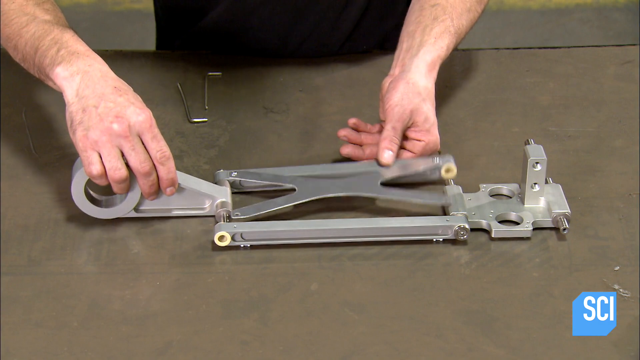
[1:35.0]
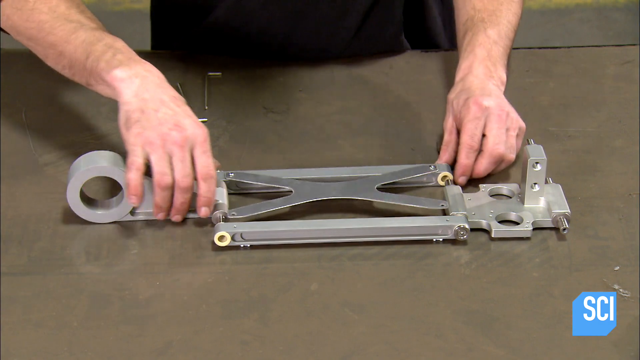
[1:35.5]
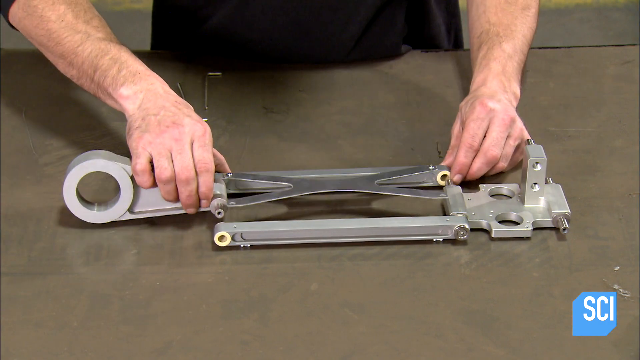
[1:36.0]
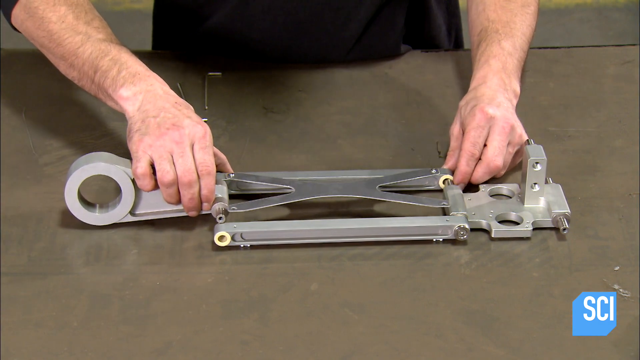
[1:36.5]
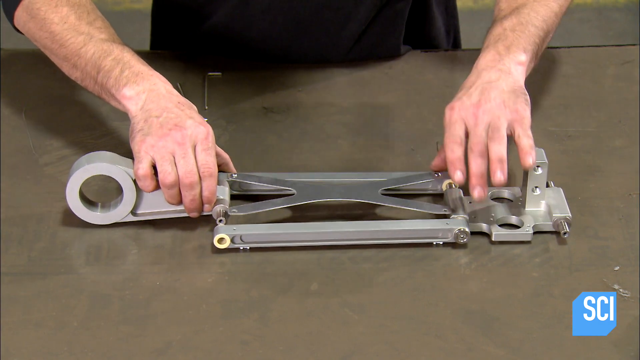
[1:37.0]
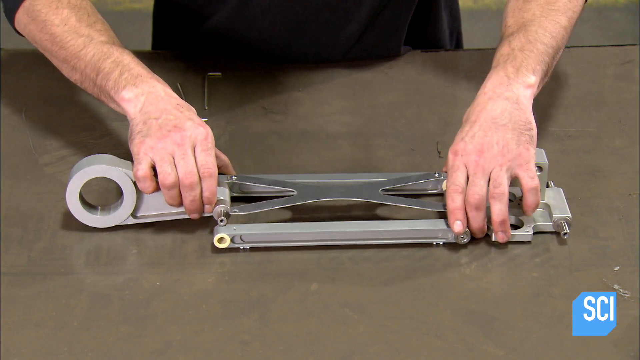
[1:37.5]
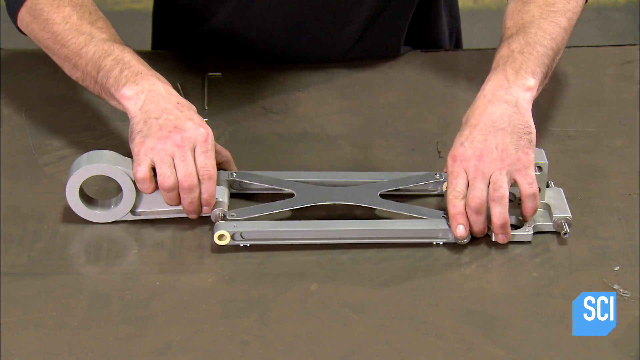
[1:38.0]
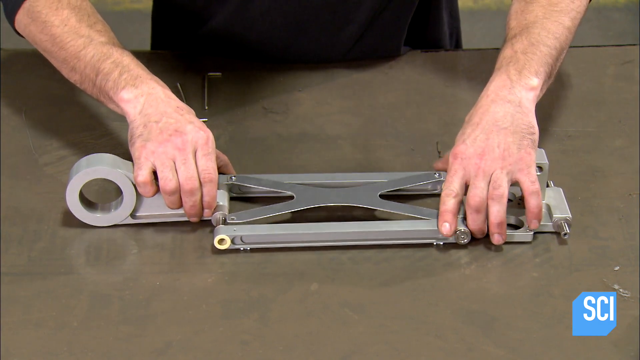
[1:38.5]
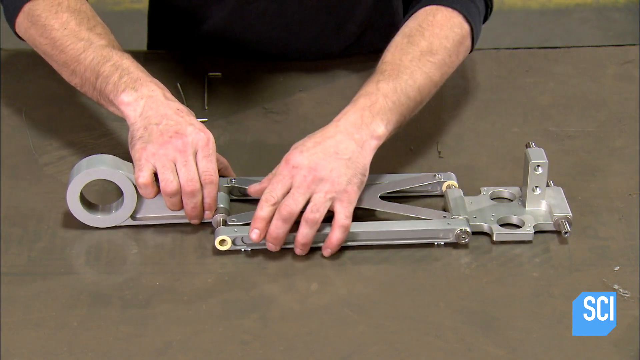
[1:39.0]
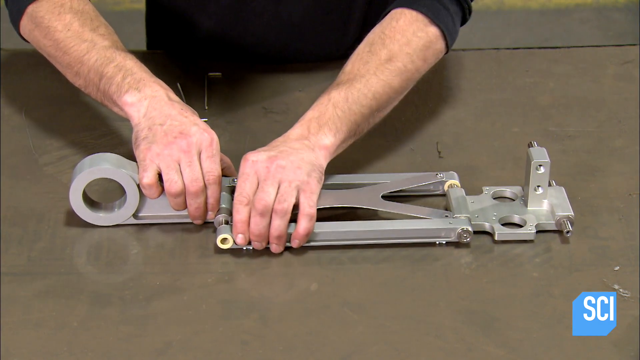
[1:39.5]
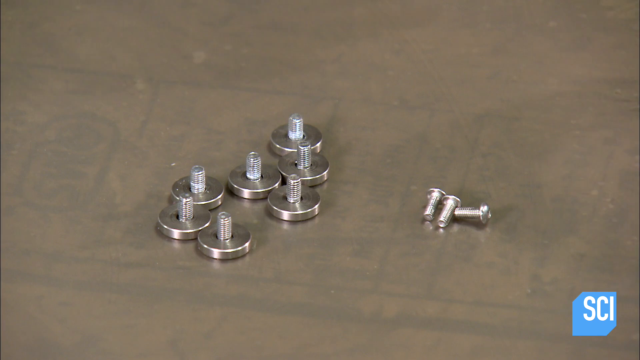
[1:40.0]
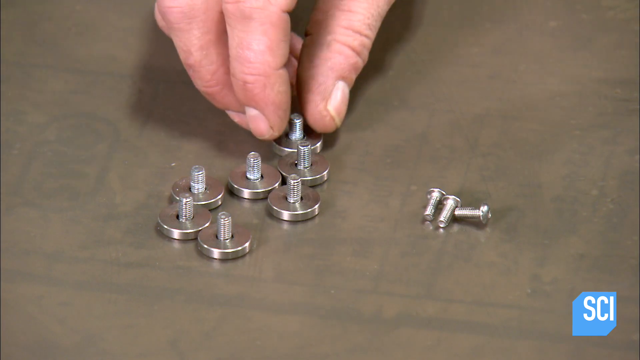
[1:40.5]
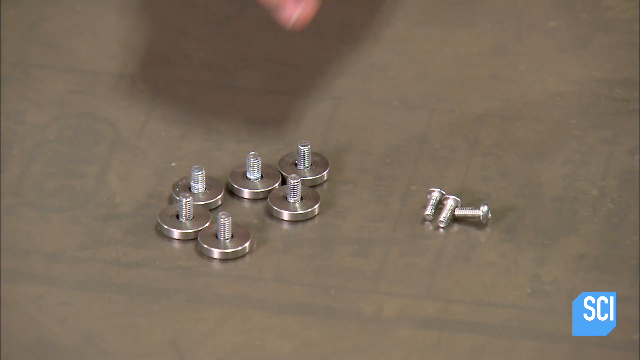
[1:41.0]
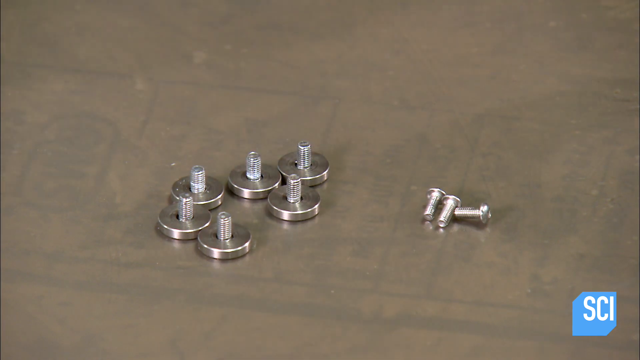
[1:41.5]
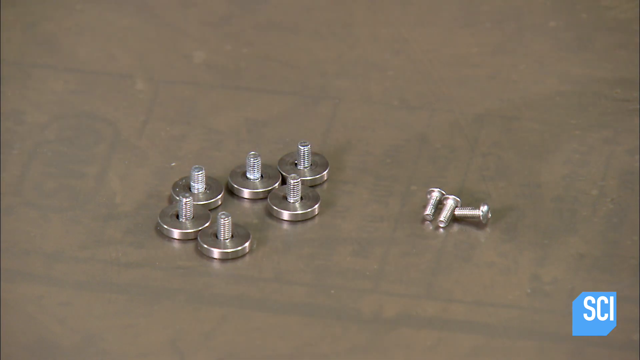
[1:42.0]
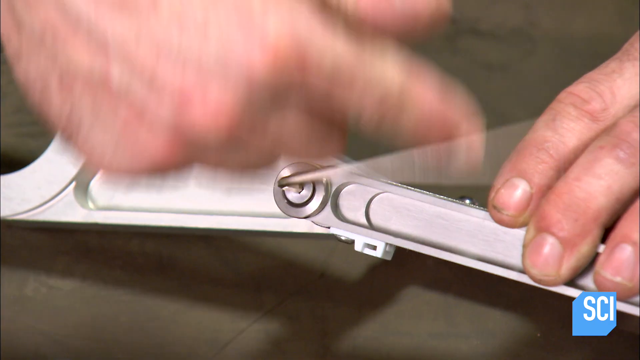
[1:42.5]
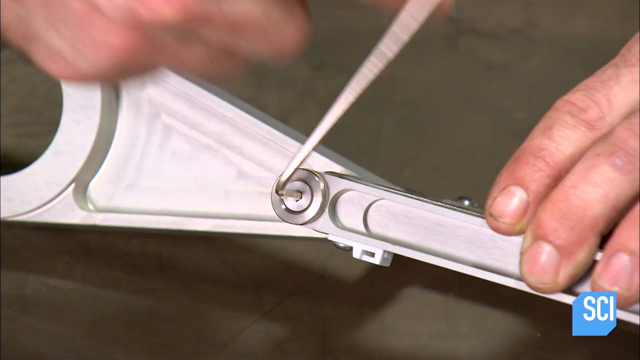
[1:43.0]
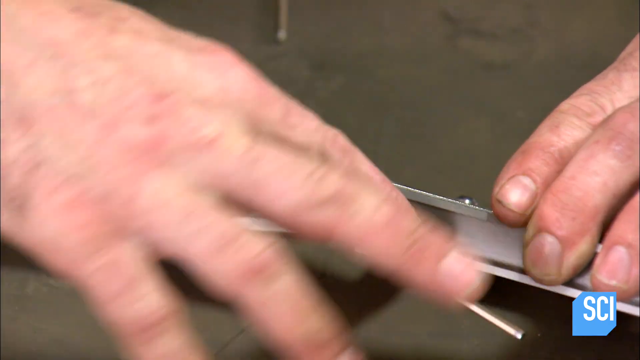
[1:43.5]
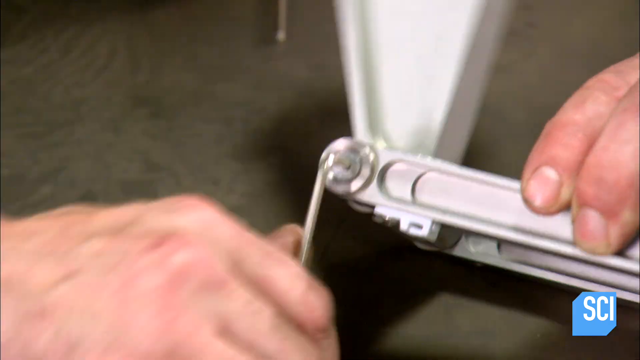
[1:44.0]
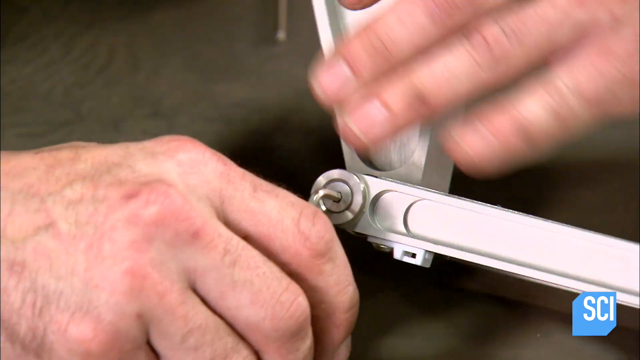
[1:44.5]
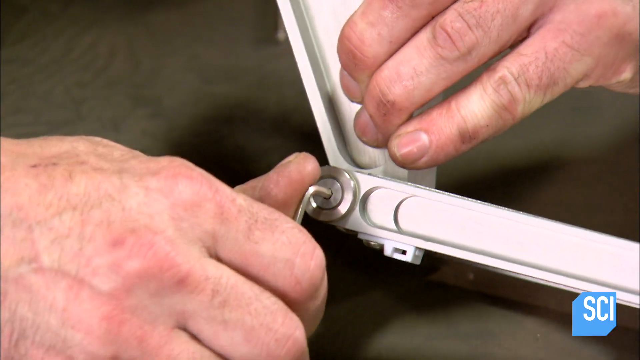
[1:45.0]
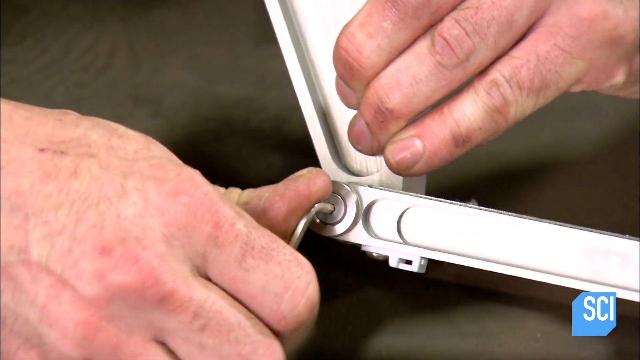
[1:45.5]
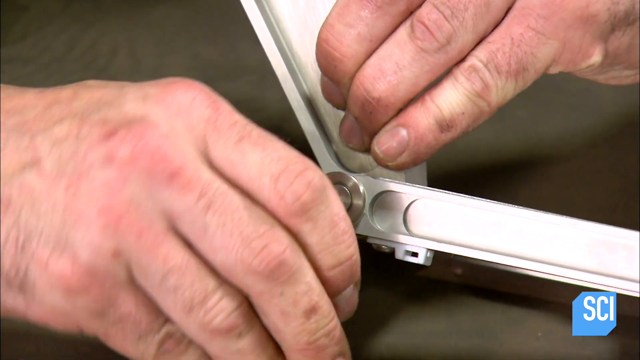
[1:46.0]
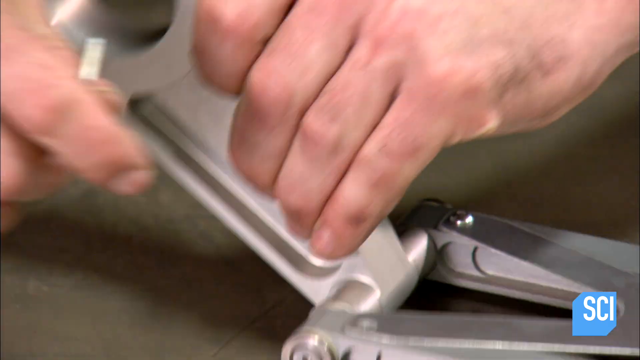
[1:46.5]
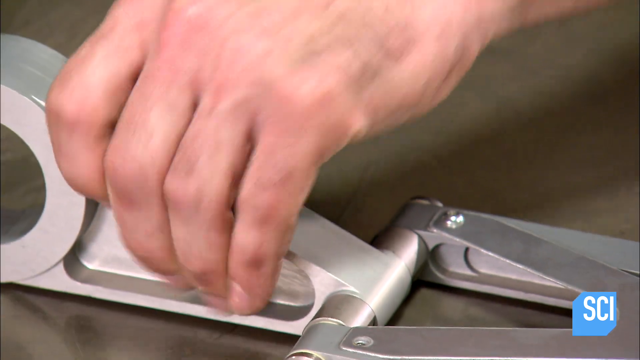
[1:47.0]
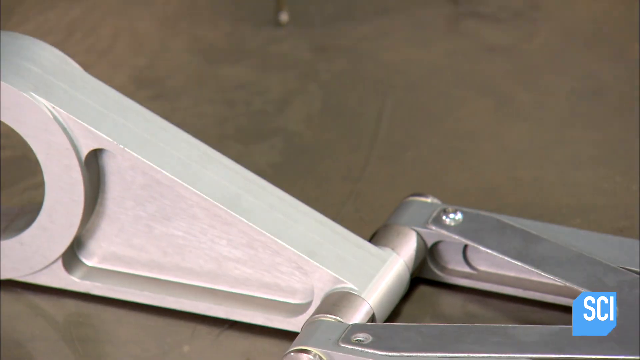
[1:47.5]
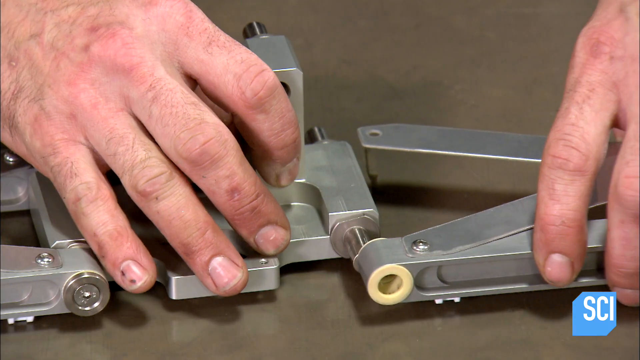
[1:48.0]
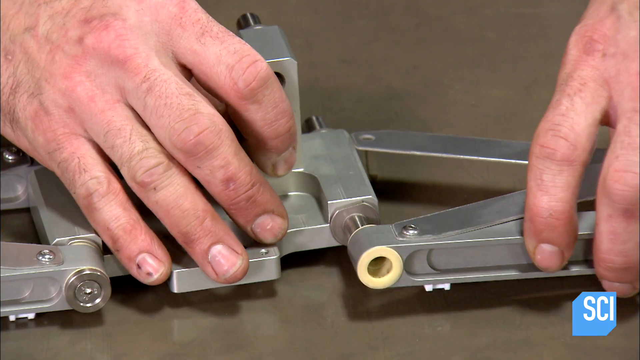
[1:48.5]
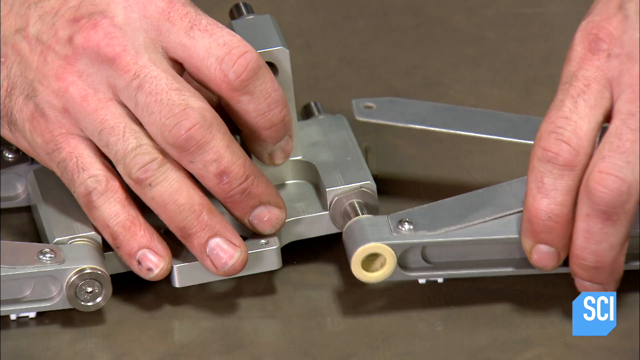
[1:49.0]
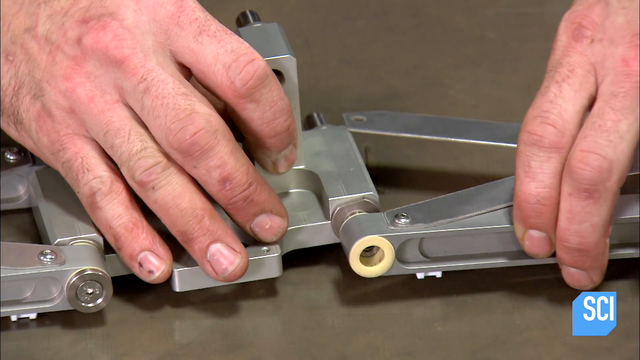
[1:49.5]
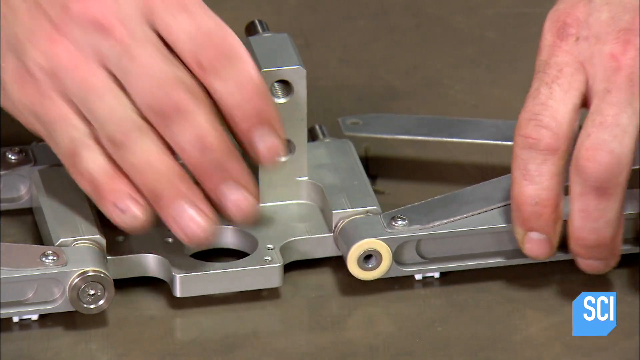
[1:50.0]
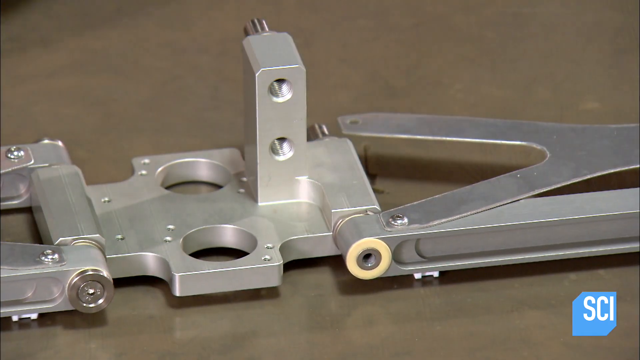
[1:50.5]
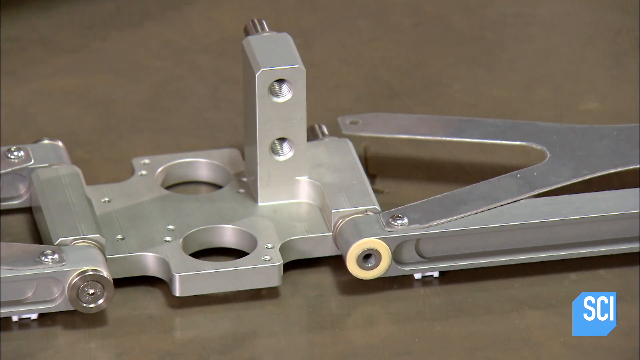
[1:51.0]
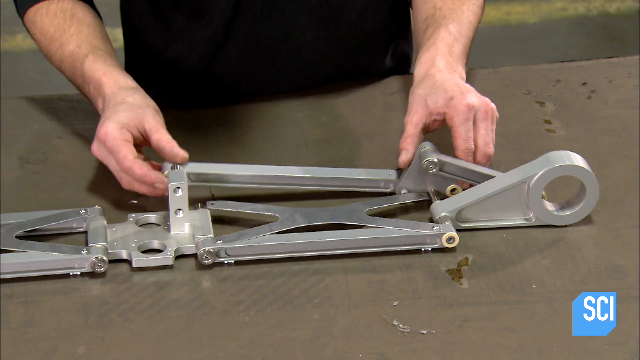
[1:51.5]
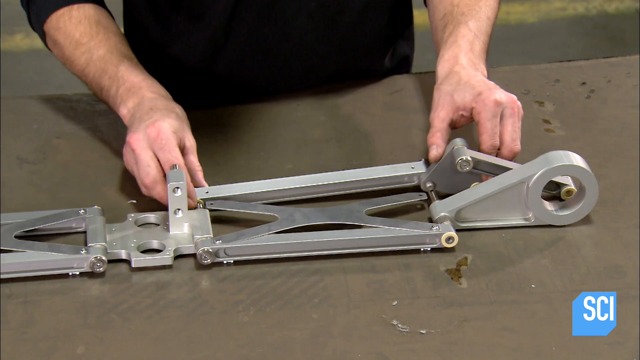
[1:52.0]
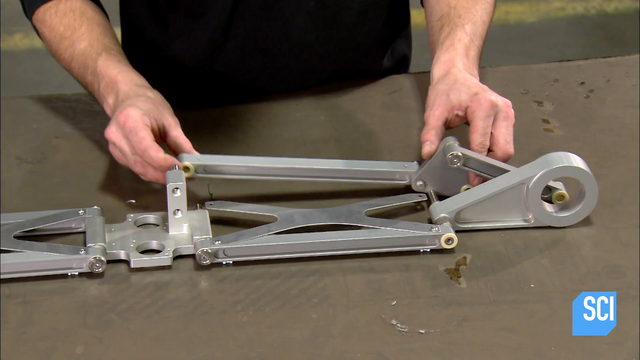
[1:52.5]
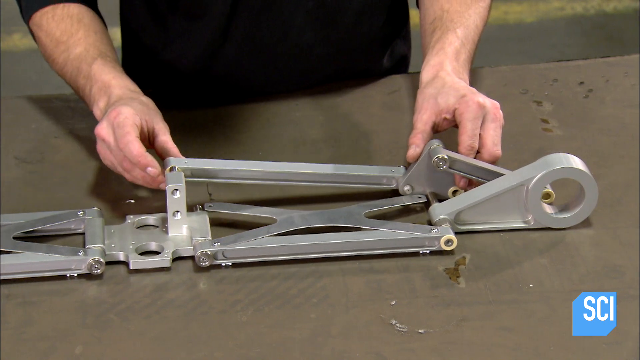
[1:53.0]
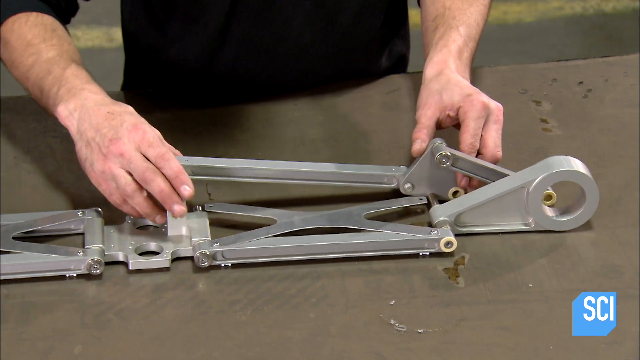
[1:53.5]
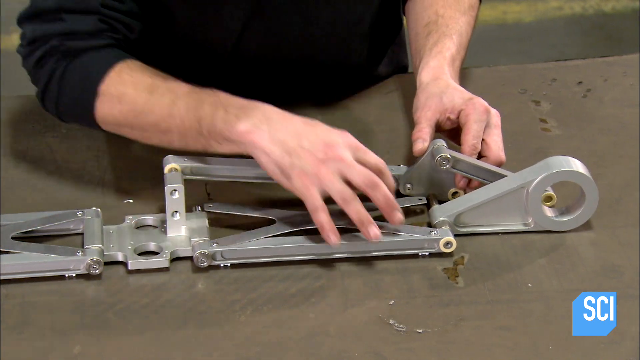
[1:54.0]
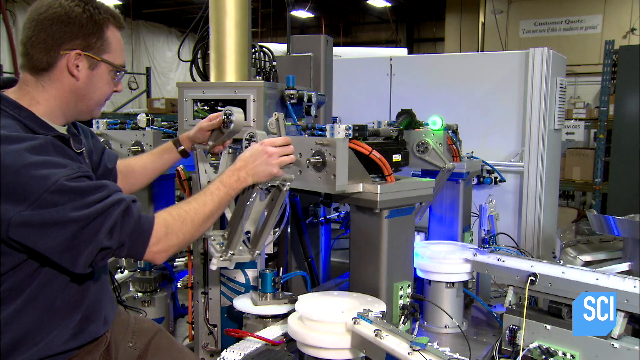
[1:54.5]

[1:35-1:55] The man assembles the two pieces, putting an X-shaped piece inside a rectangular piece. He then assembles other parts onto these two pieces, apparently on a brown table; only his arms are visible. He picks up a screw and tightens it into place, fixing another piece onto the item he is making. He lines up another piece, and then it looks like he has finished putting the pieces together and is about to put the assembled piece onto some sort of machine.